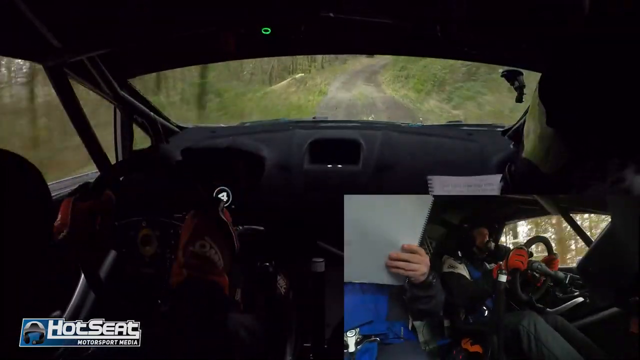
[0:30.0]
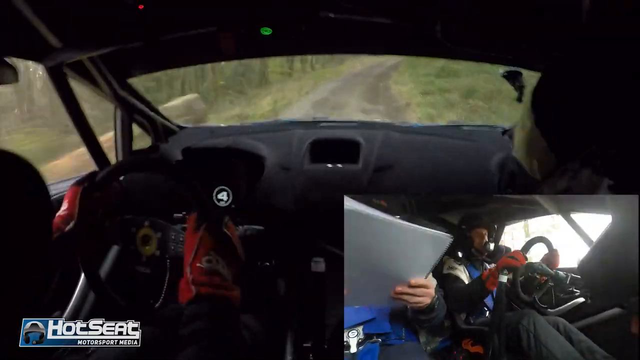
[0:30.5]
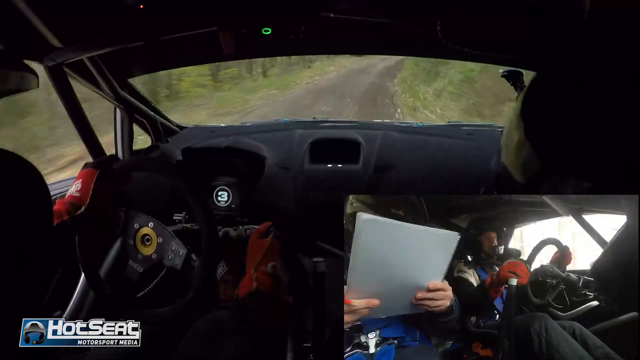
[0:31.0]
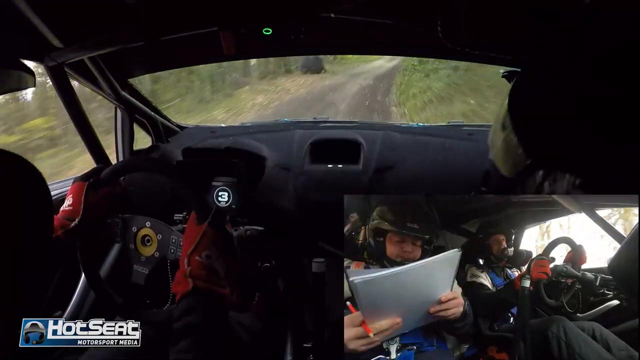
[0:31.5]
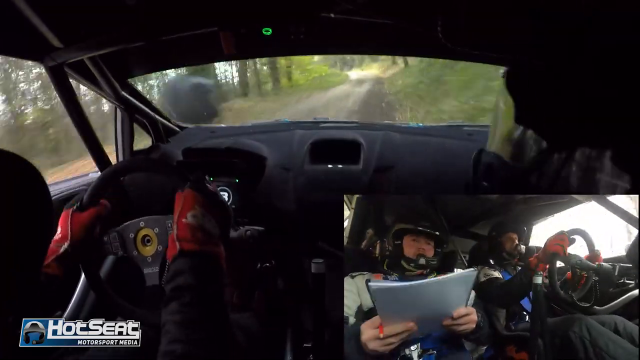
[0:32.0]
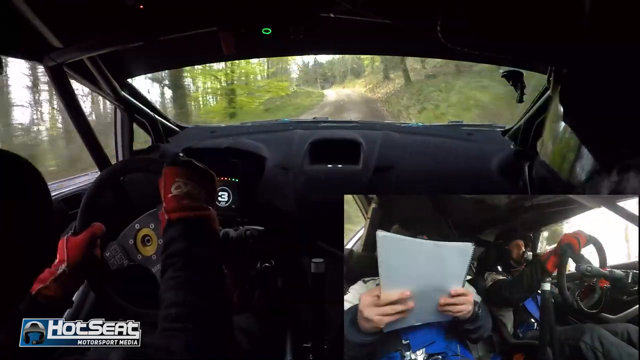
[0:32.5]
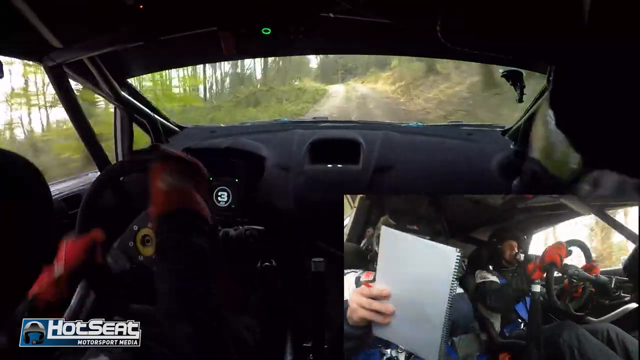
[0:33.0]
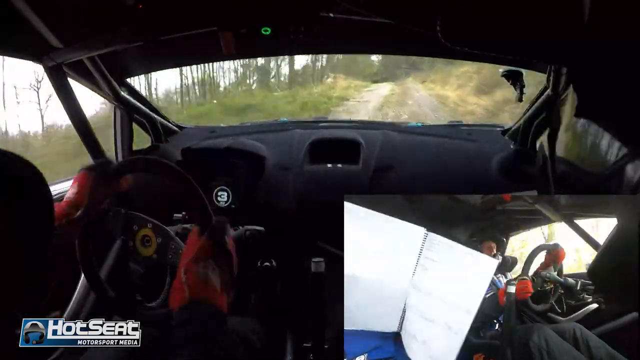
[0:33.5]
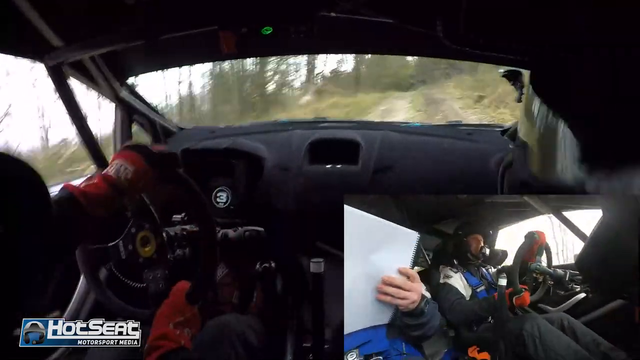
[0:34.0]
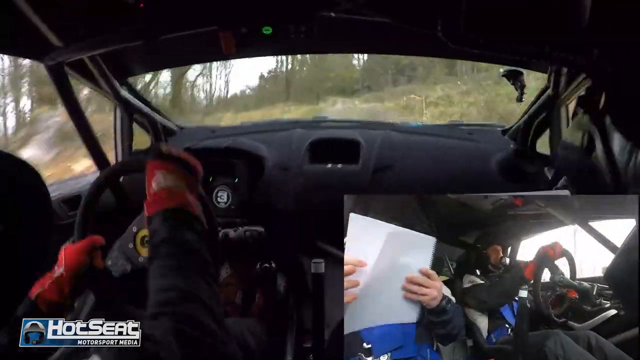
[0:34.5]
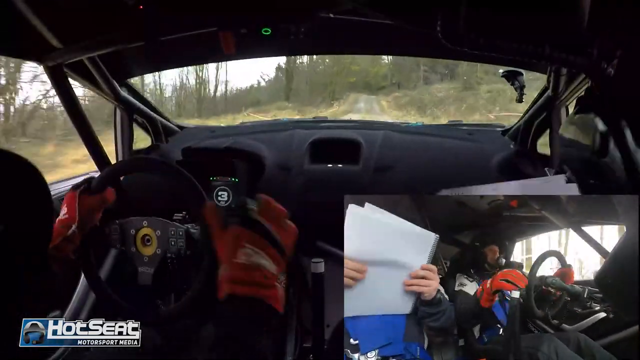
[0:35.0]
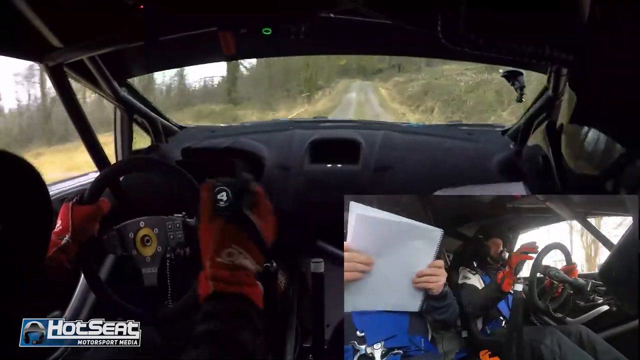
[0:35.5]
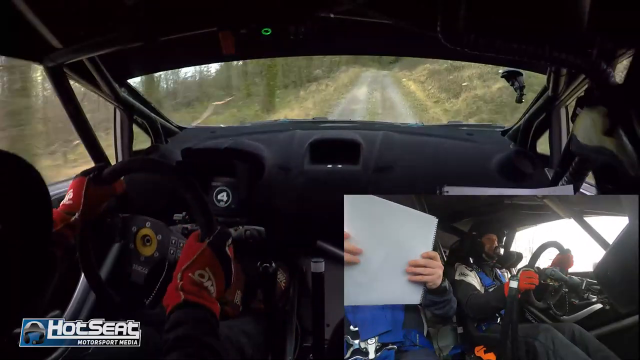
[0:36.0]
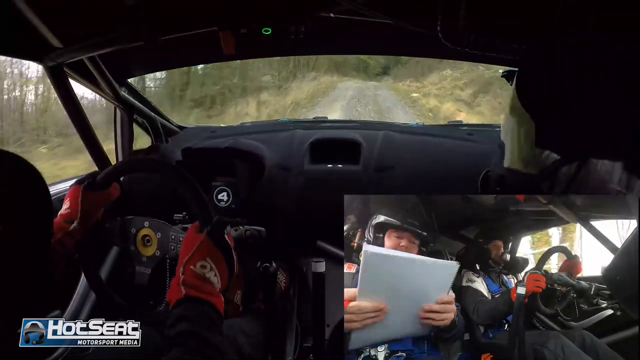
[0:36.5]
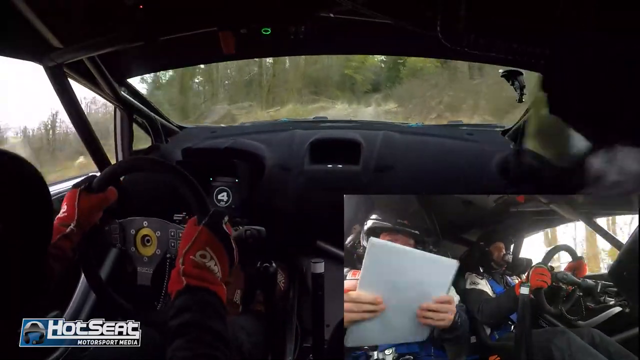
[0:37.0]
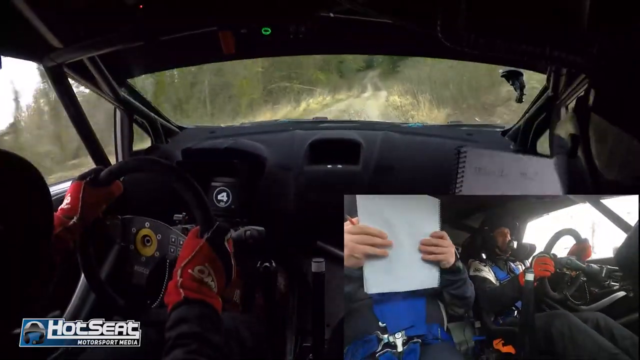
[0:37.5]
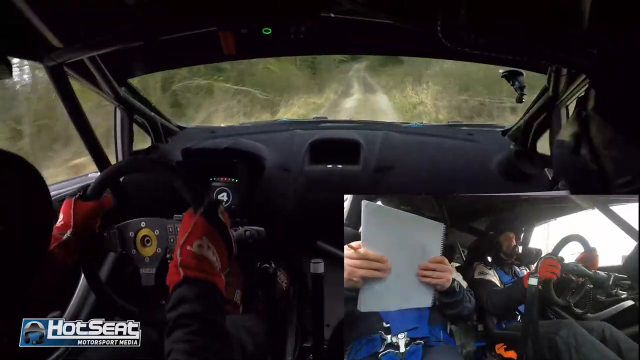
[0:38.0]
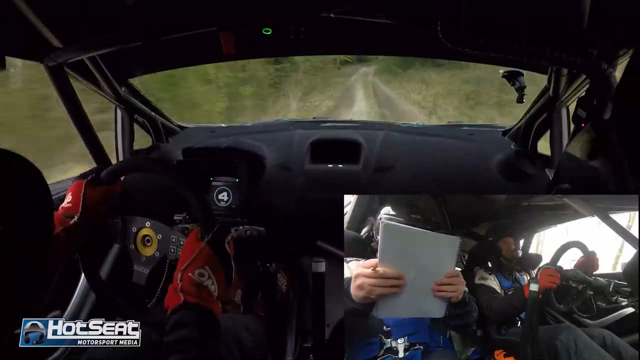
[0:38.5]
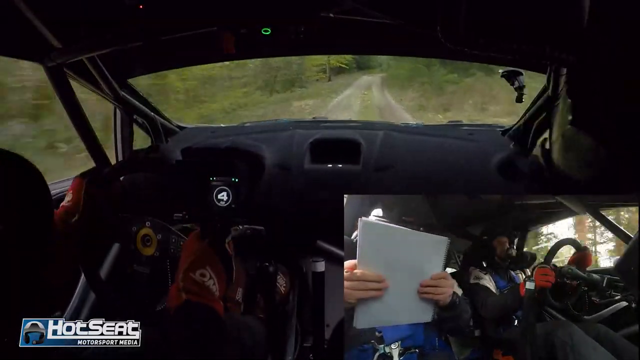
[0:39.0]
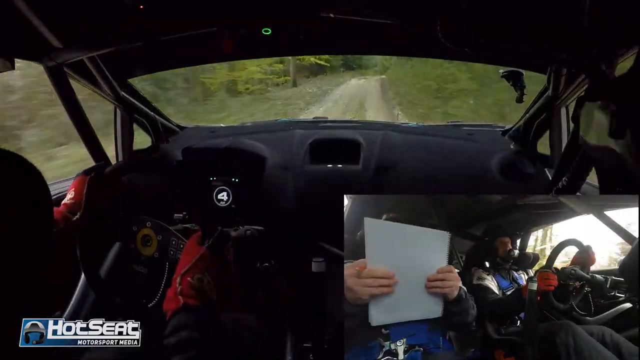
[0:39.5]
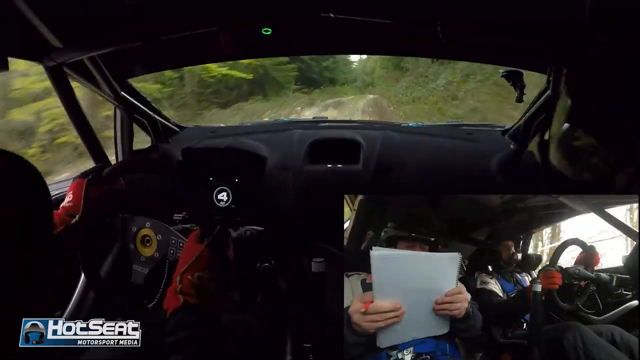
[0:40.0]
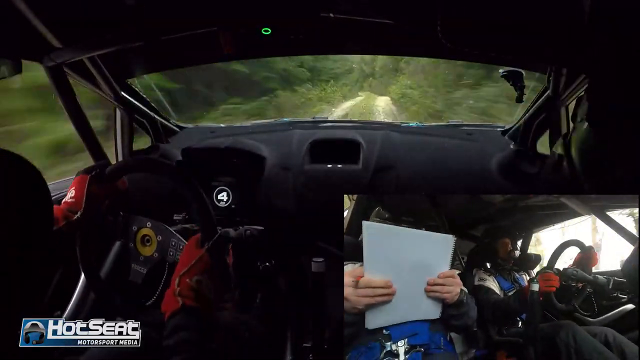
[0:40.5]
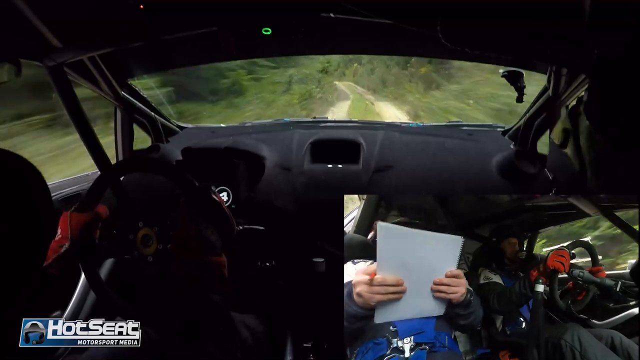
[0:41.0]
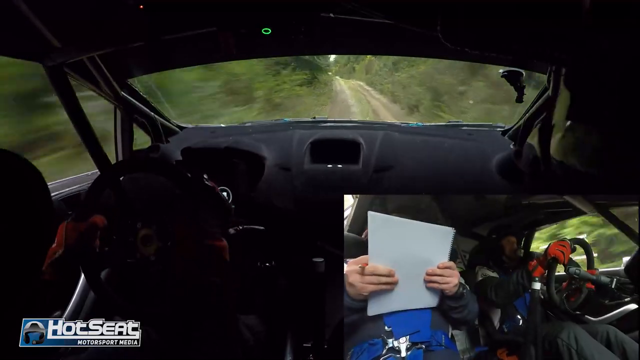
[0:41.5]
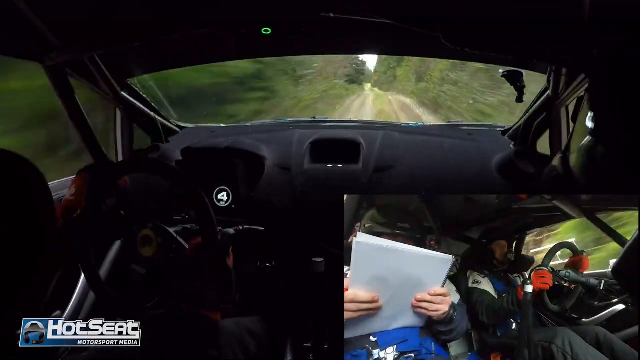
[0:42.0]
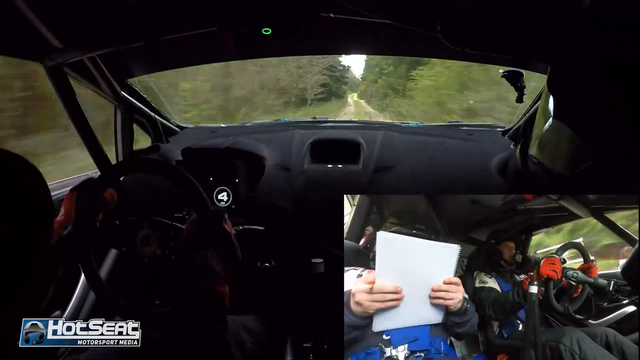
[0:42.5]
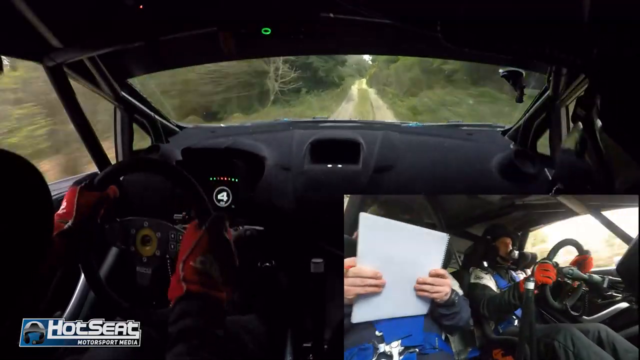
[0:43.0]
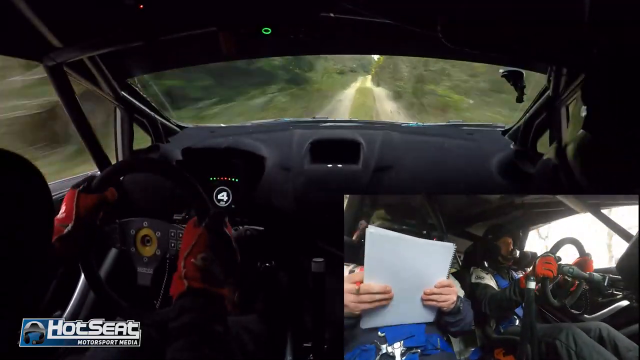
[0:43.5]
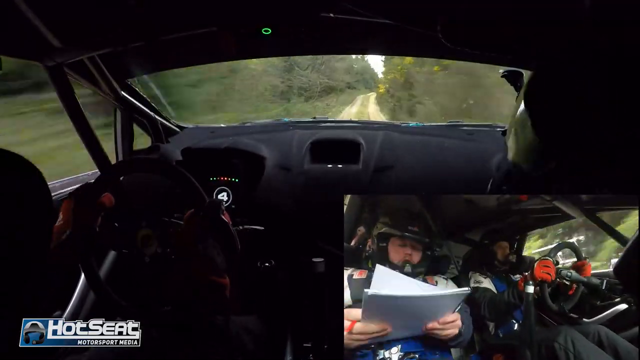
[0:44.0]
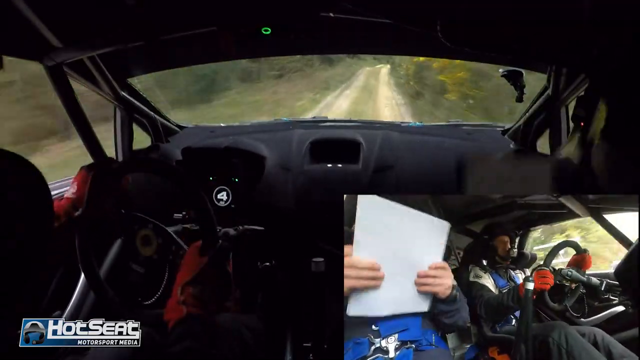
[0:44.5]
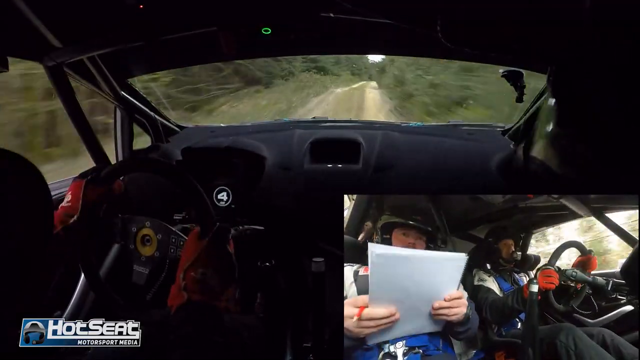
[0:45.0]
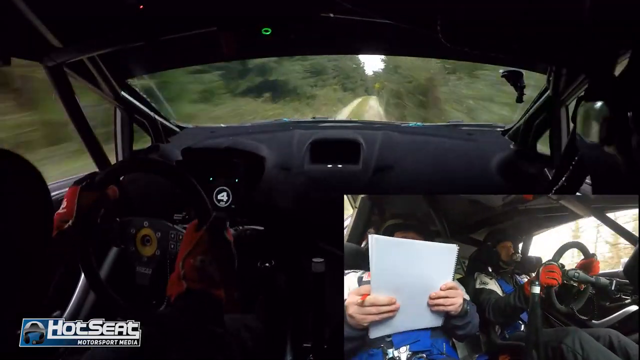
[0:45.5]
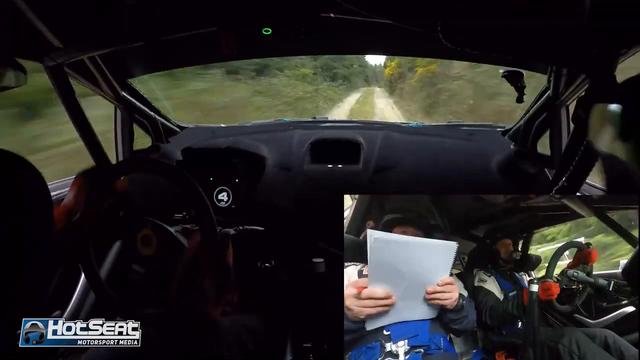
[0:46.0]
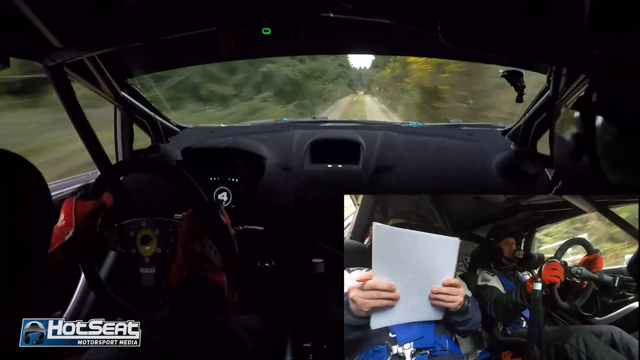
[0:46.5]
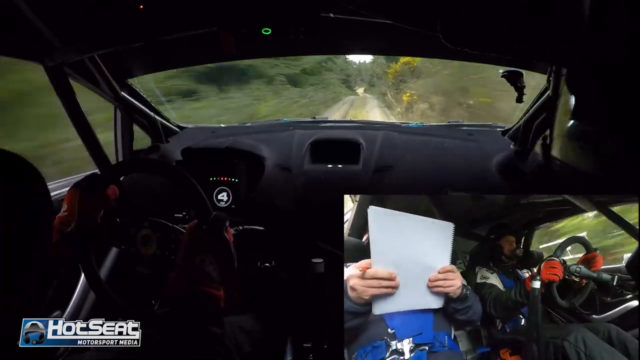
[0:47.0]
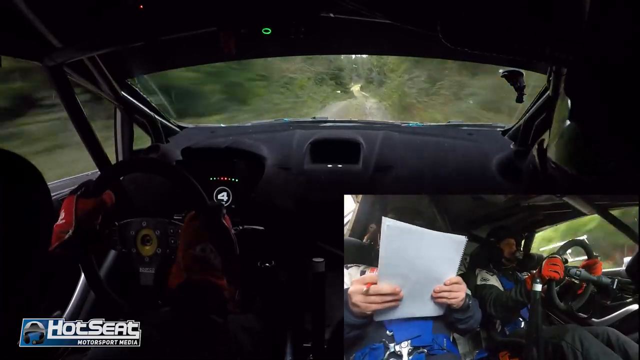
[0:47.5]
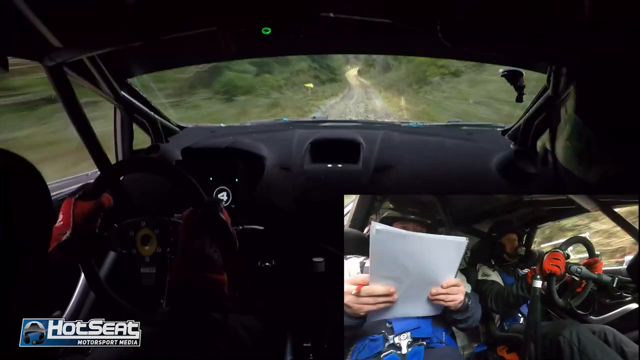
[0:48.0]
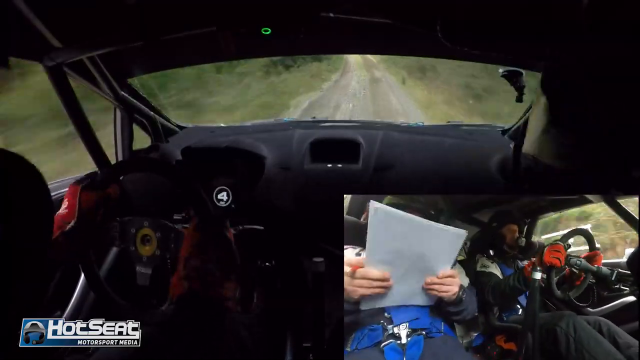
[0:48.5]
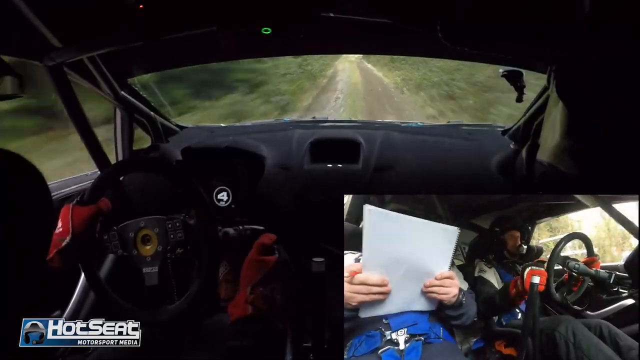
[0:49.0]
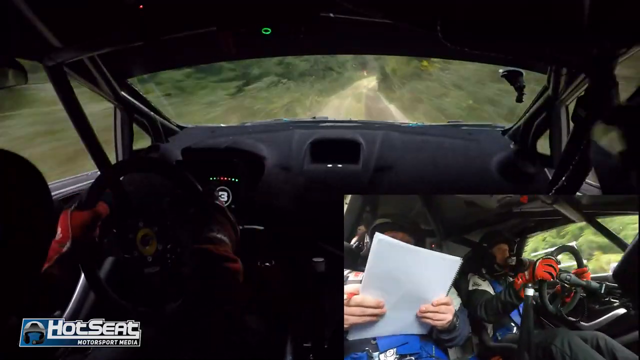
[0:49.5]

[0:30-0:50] The two men continue racing down a path out in the woods. The terrain is not flat but not mountainous either; it is definitely hilly, and many trees go by. The path is cleared, with dirt marks from tire tracks where they drive. The man at the steering wheel wears red gloves, and a number four is visible. In the view showing the men, his hands move up and down as he drives. The other man still holds the papers, and his face is only glimpsed when they hit bounces. Both appear to wear protective racing gear. On top of the car a green light is on. The driver shifts a lot and seems to know what he is doing. The video shows the view of them driving and the other camera view of the two men.